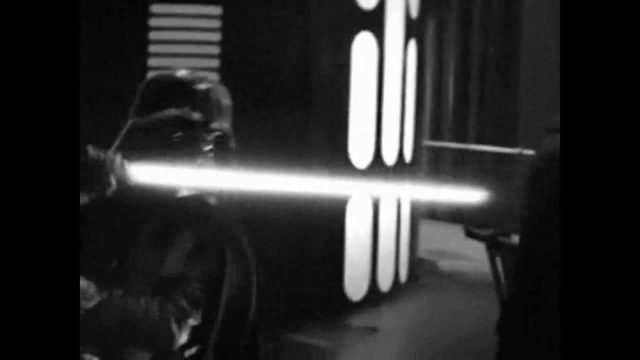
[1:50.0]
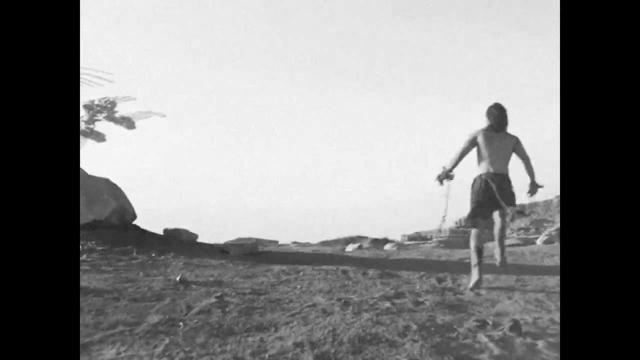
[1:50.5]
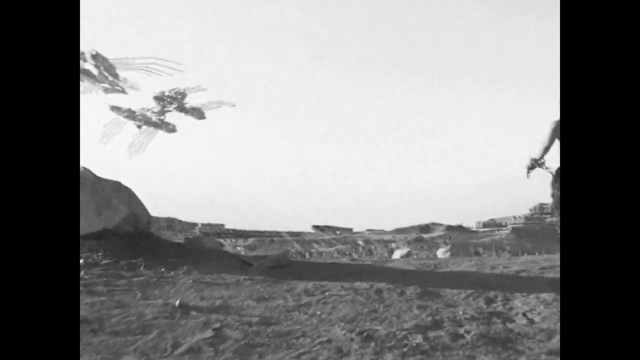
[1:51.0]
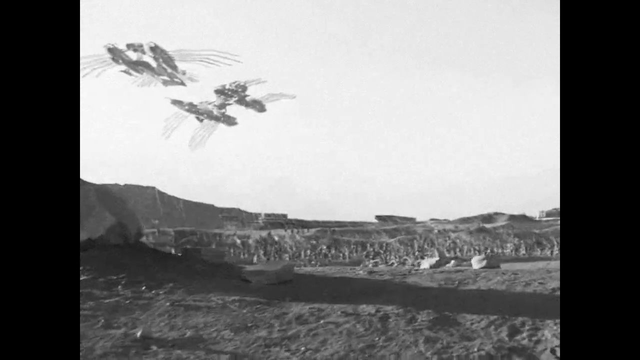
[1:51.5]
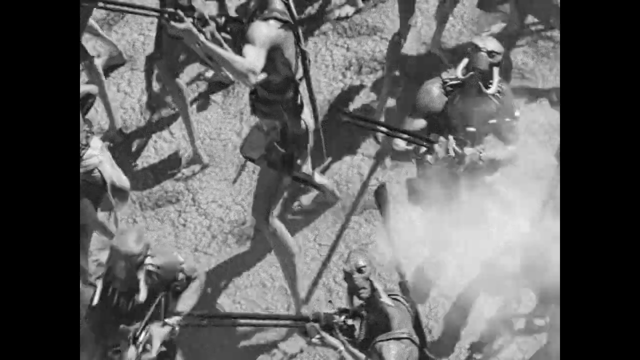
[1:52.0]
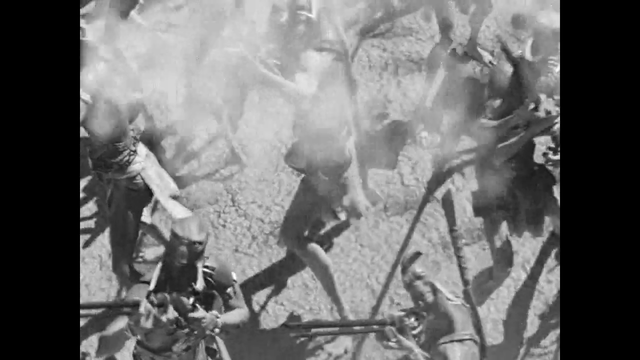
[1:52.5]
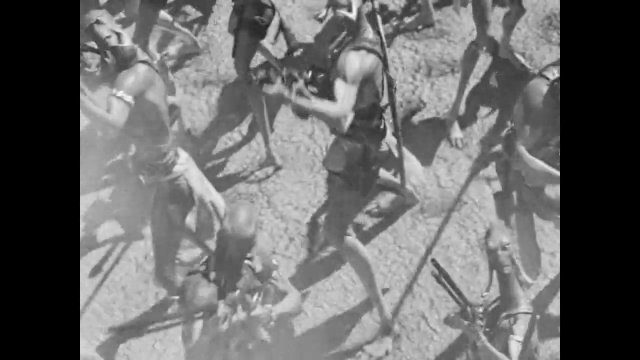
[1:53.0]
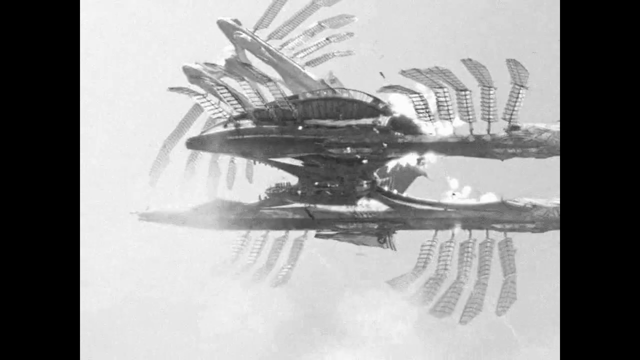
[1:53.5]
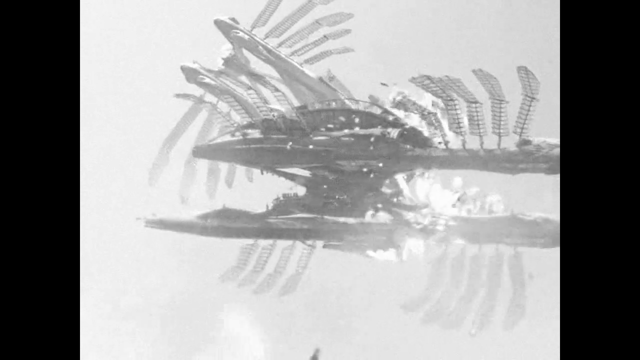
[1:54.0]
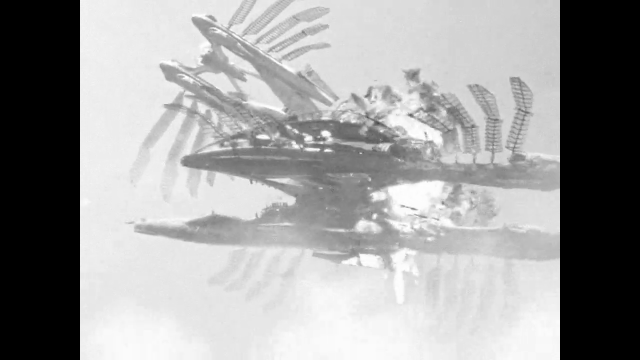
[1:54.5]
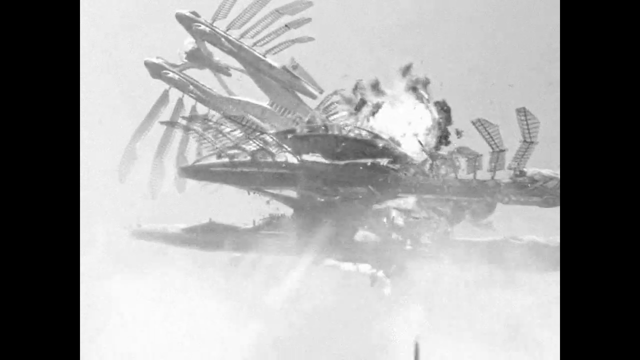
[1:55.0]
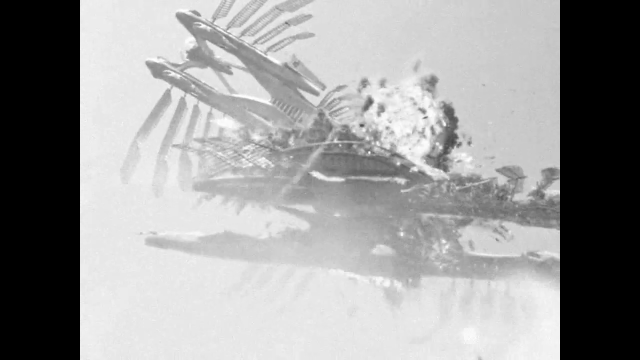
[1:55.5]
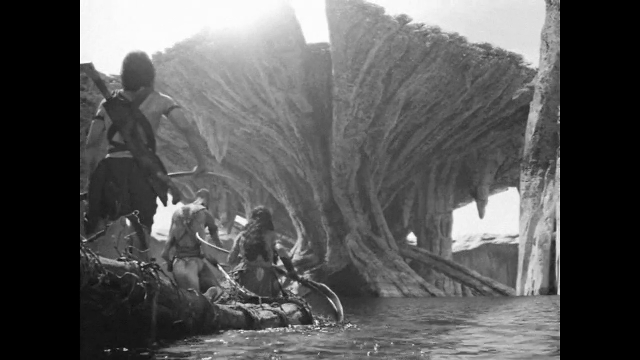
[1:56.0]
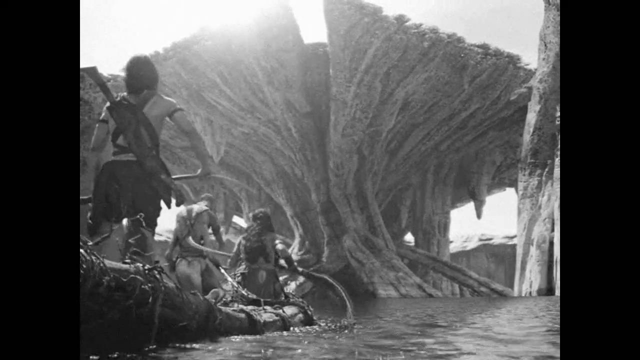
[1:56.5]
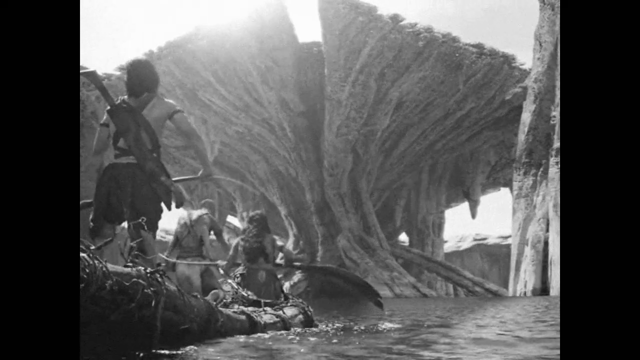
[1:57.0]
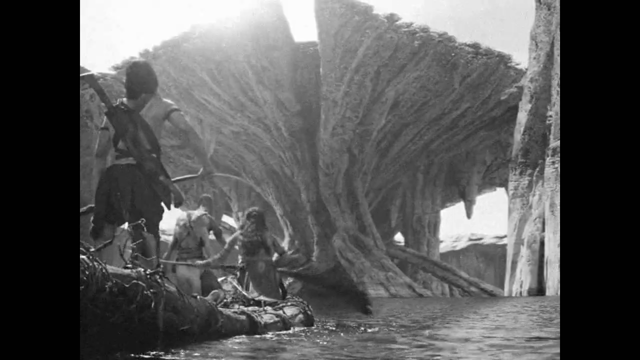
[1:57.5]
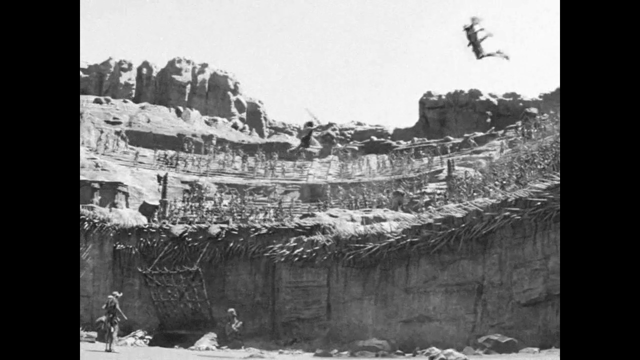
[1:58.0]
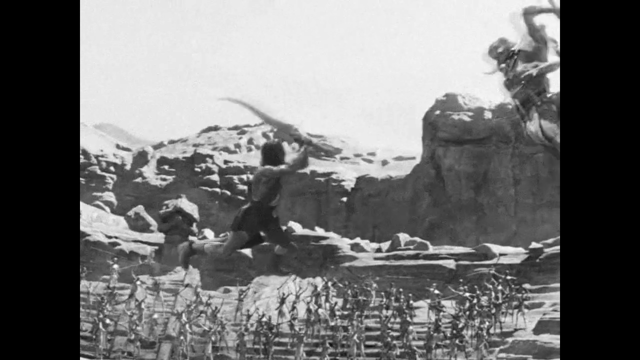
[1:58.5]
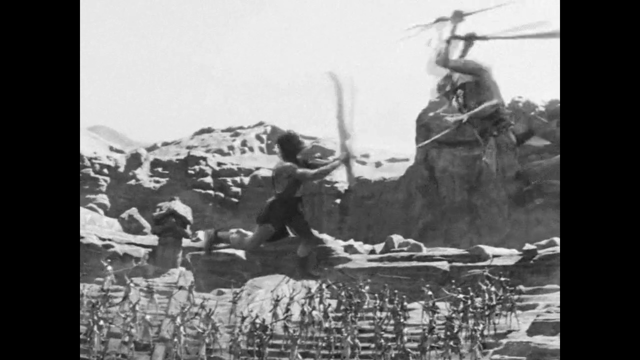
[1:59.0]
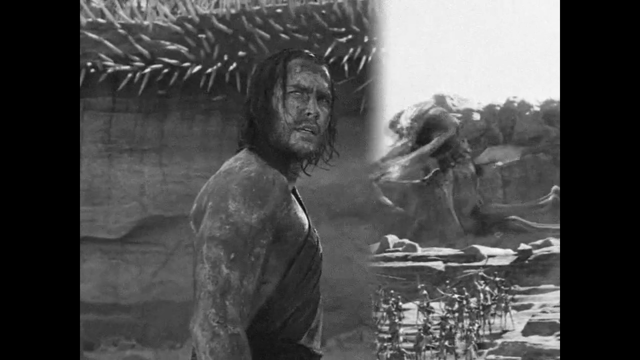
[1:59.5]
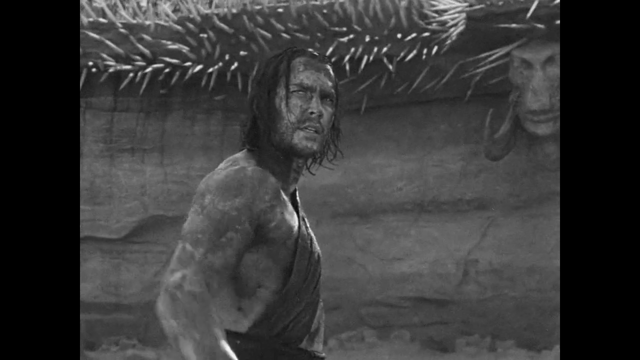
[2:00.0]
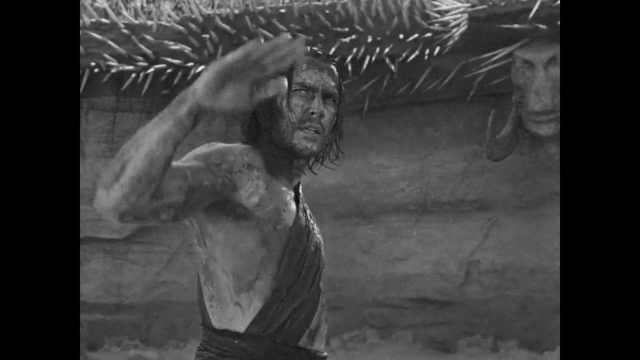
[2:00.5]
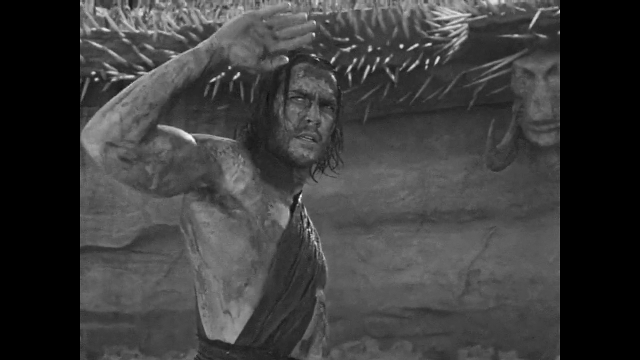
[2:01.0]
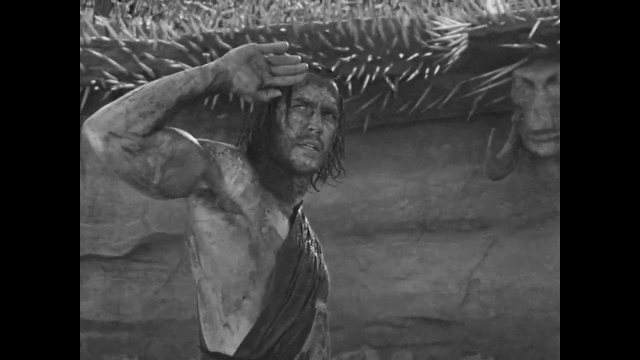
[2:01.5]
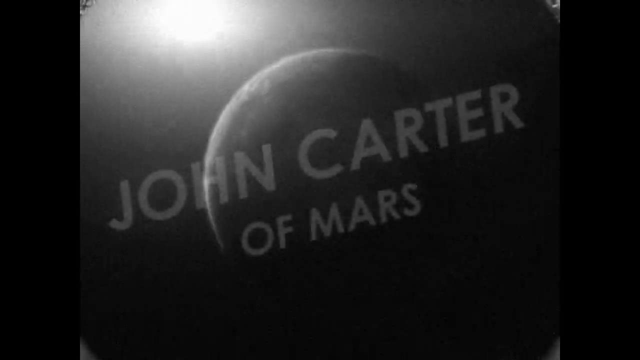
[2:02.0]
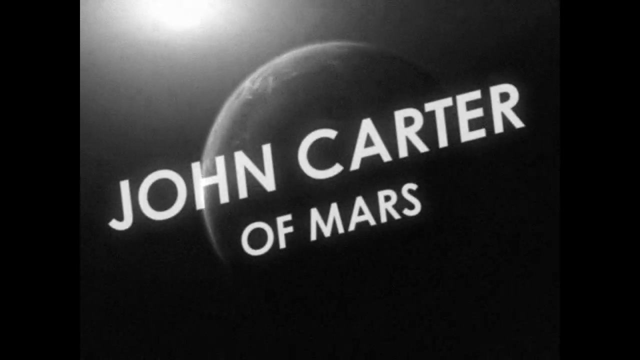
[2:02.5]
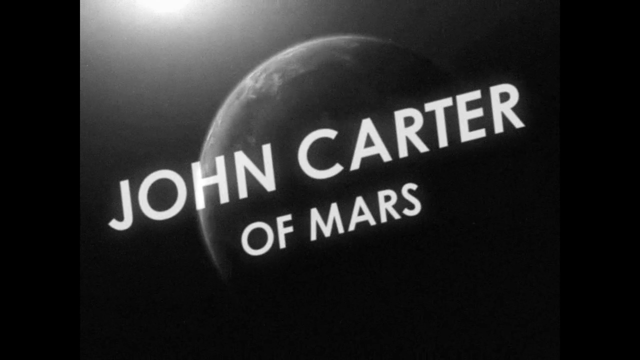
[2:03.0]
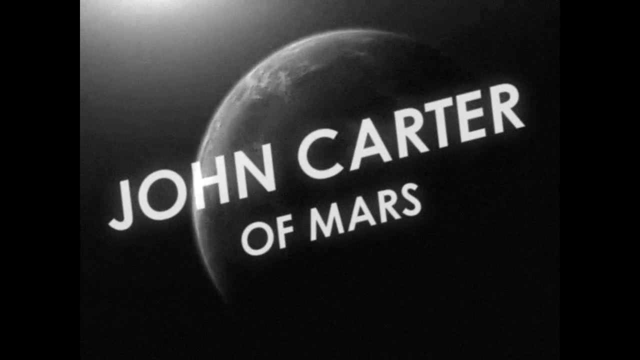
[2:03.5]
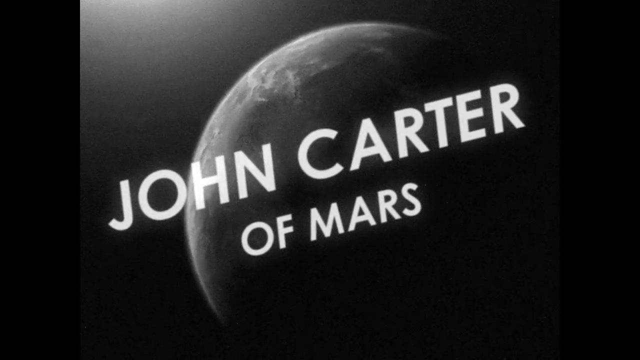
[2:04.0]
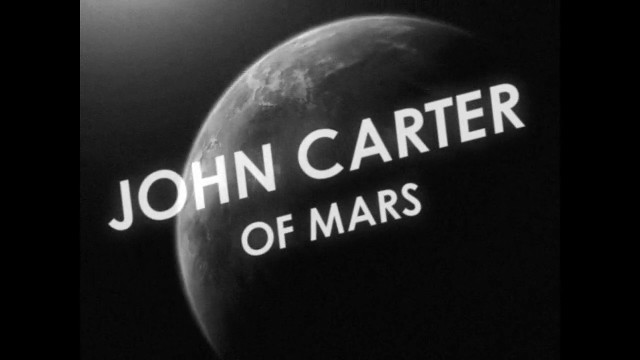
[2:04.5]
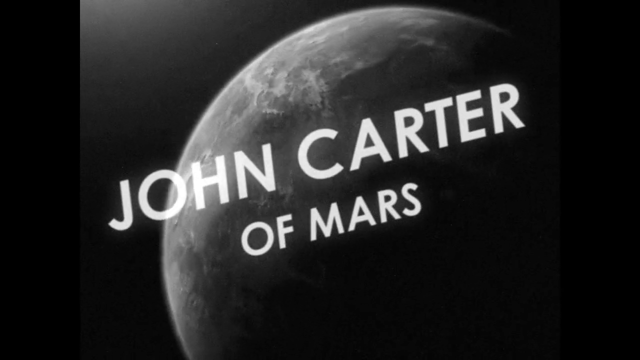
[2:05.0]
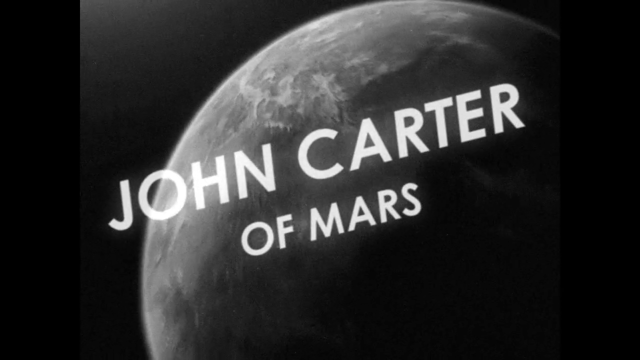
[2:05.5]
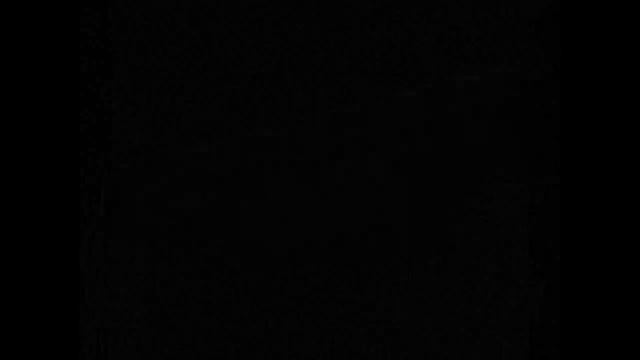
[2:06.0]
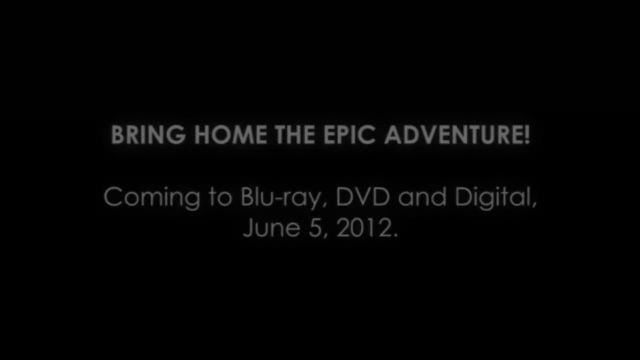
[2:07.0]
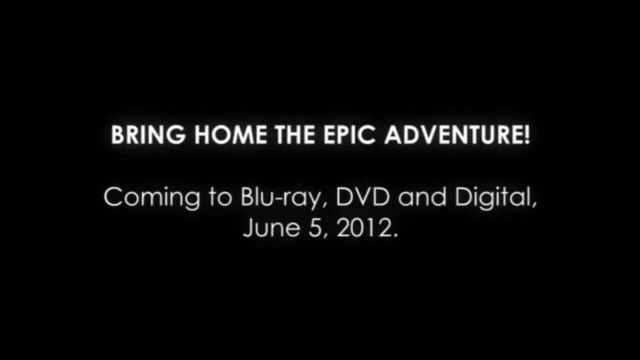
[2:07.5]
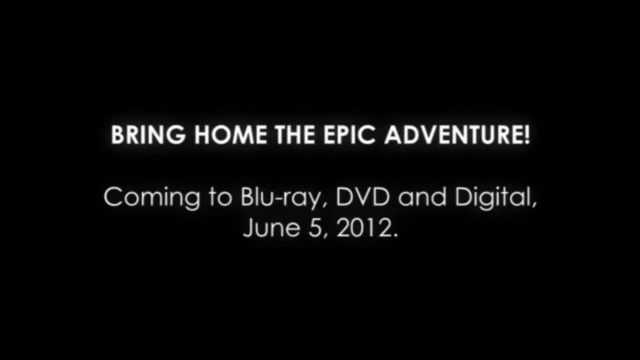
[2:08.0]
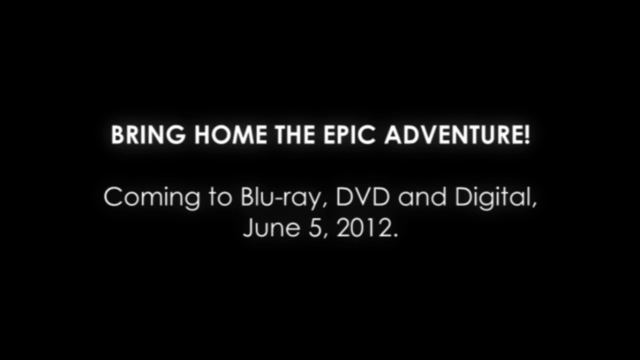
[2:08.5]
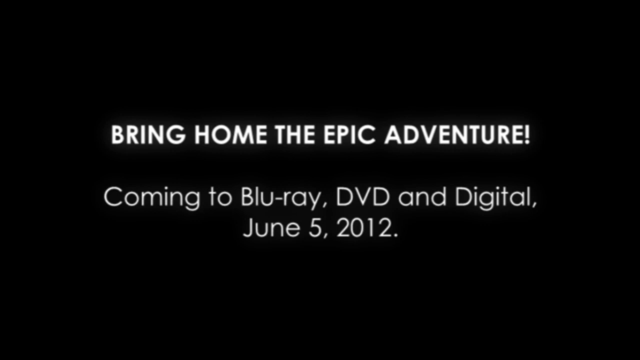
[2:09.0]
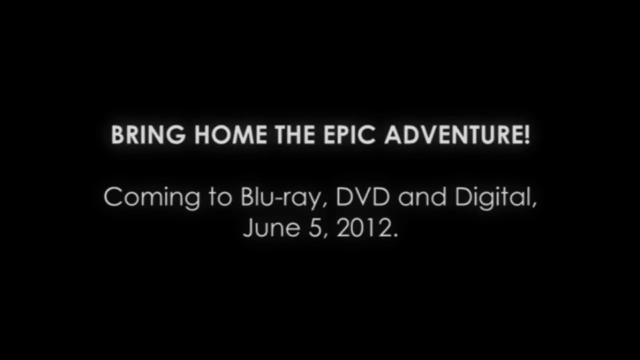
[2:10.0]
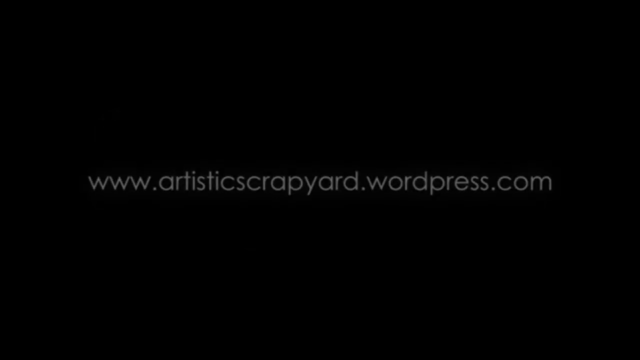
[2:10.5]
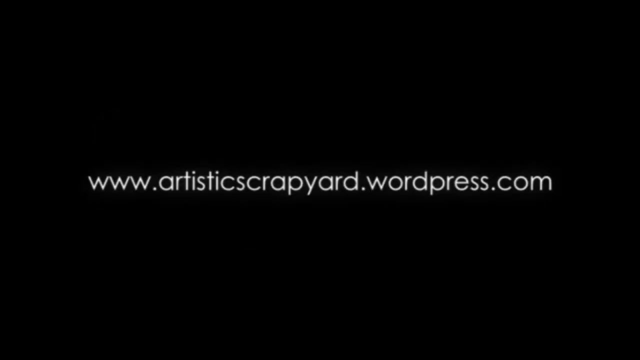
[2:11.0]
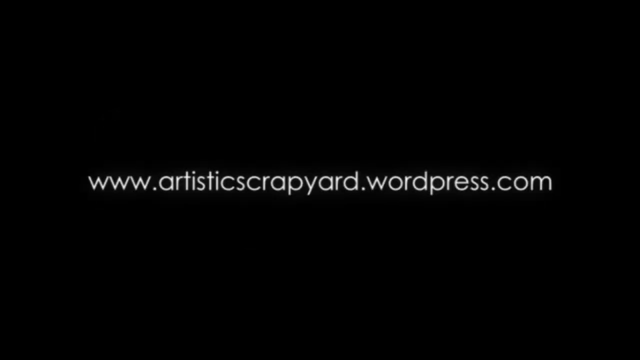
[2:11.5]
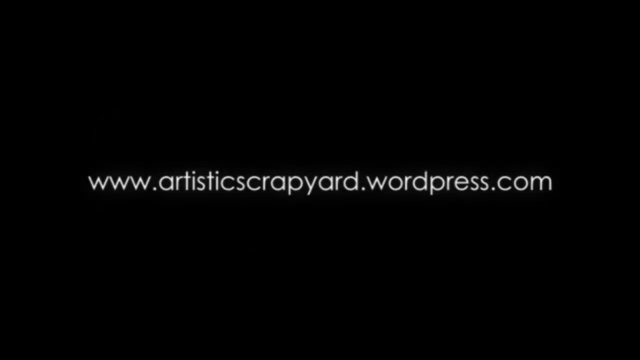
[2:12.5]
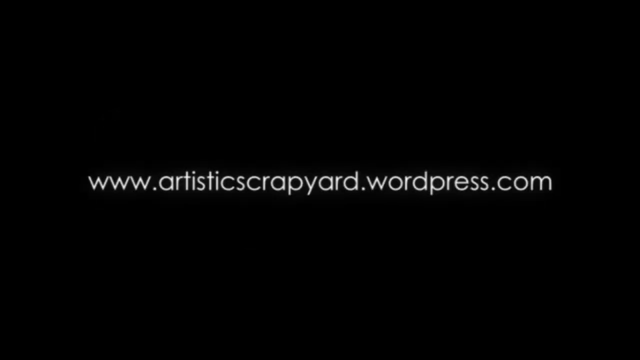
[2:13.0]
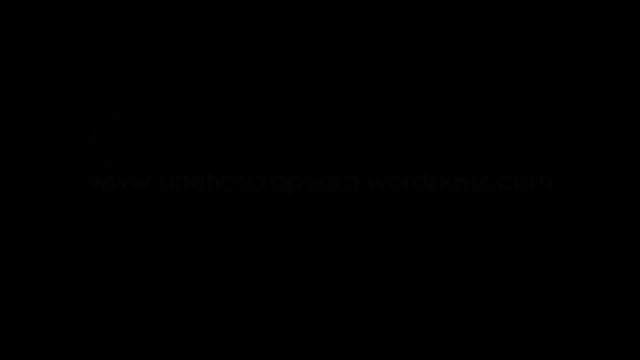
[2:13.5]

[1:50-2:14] Luke Skywalker and Darth Vader fight with lightsabers in a black-and-white image that is hard to make out. The same men appear again as two spaceships come toward the camera; the creatures try to fight the spaceships, which are in the air but protected. Three people and the men appear, and the man fights the creatures again, each holding a sword. The man waves goodbye; he is John Carter, and John Carter of Mars is shown. The address www.artisticsscrapyard.wordpress.com appears. Throughout, everything is black and white, showing people fighting each other, people fighting creatures, and creatures fighting creatures.